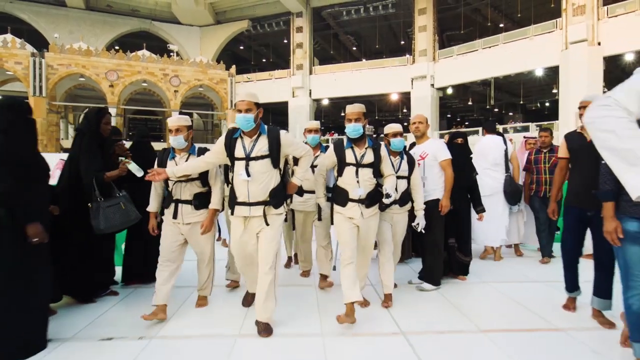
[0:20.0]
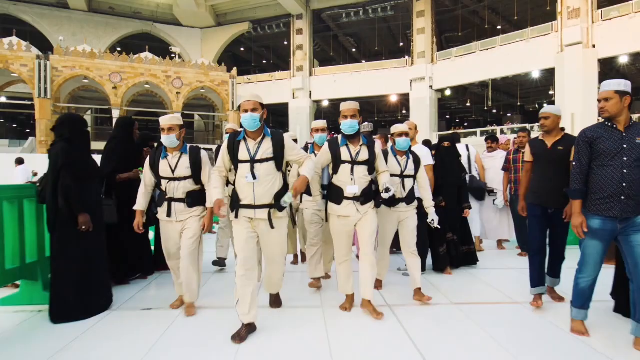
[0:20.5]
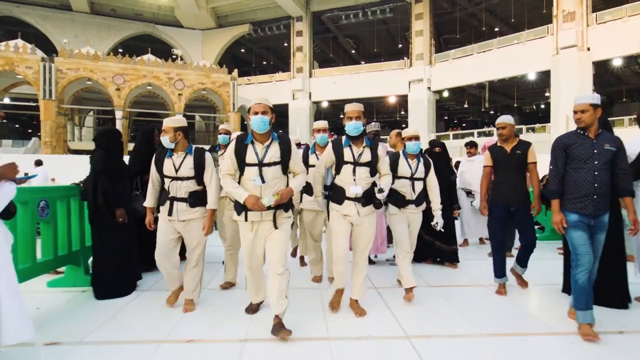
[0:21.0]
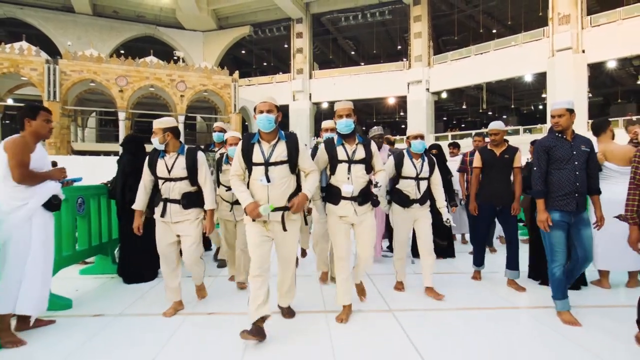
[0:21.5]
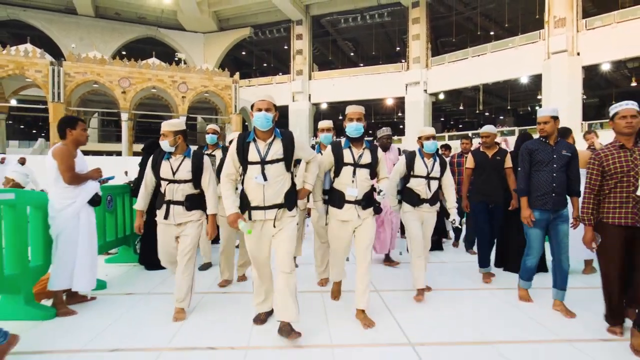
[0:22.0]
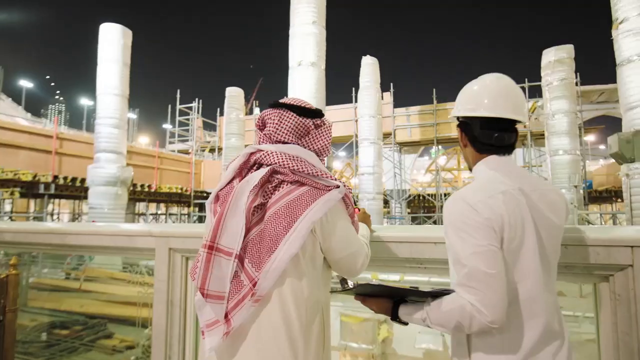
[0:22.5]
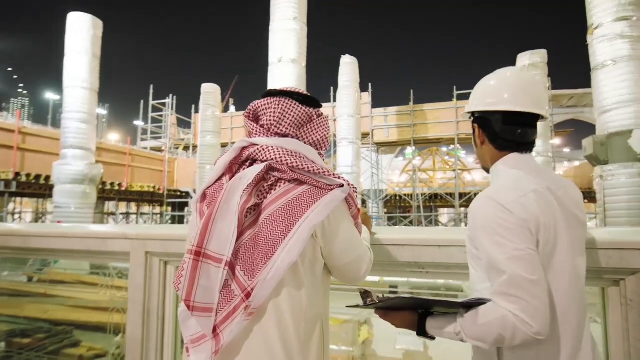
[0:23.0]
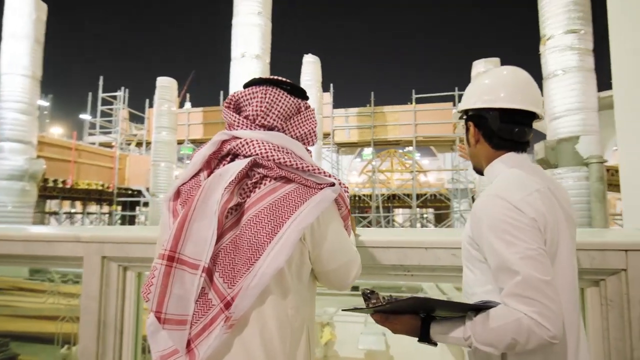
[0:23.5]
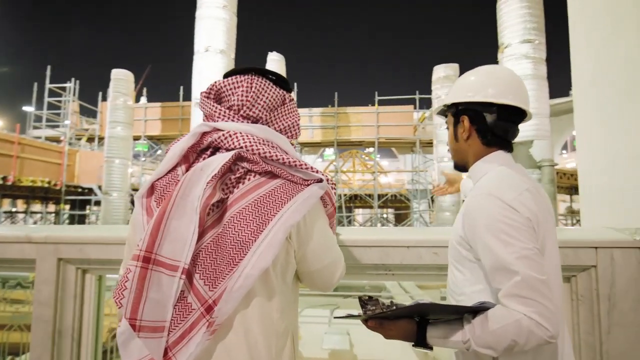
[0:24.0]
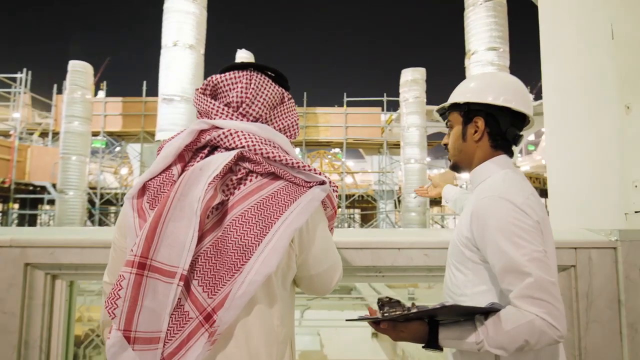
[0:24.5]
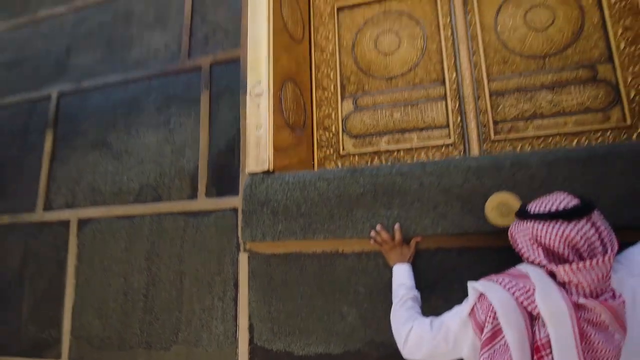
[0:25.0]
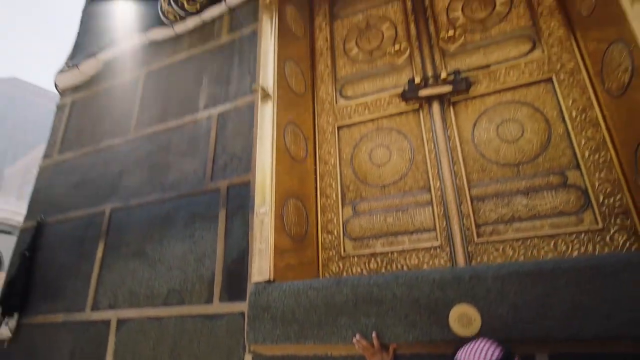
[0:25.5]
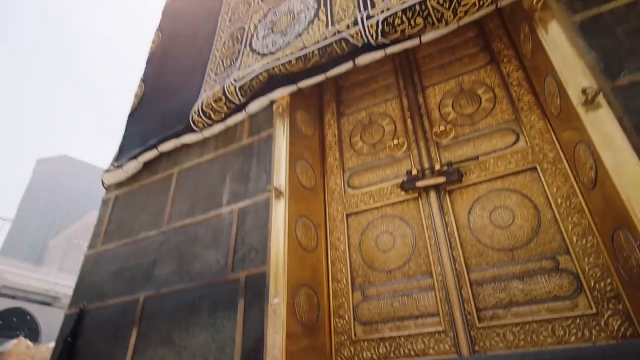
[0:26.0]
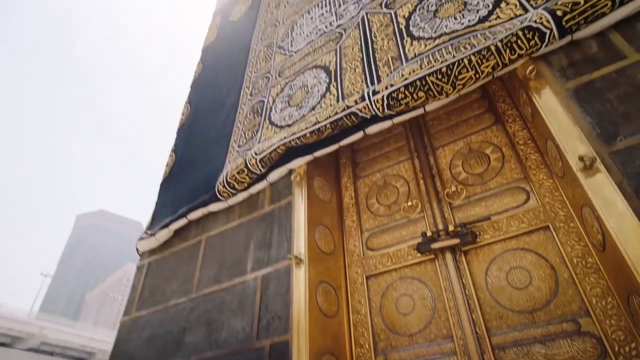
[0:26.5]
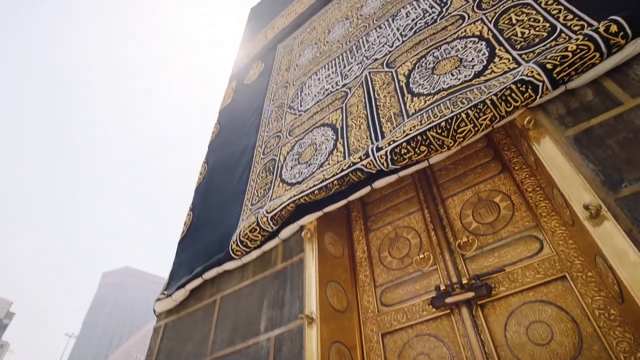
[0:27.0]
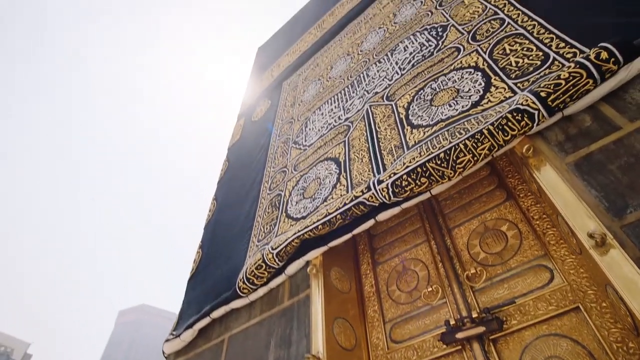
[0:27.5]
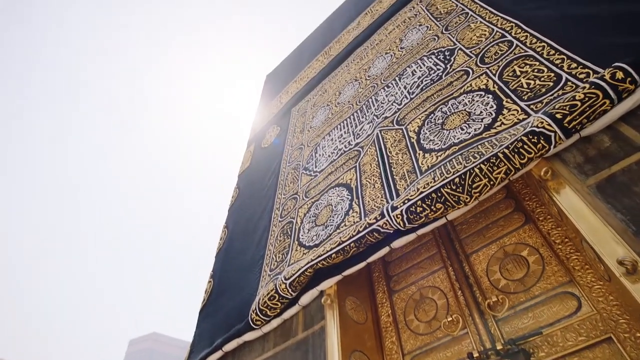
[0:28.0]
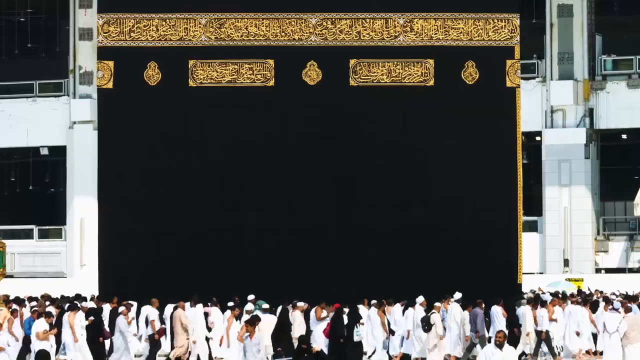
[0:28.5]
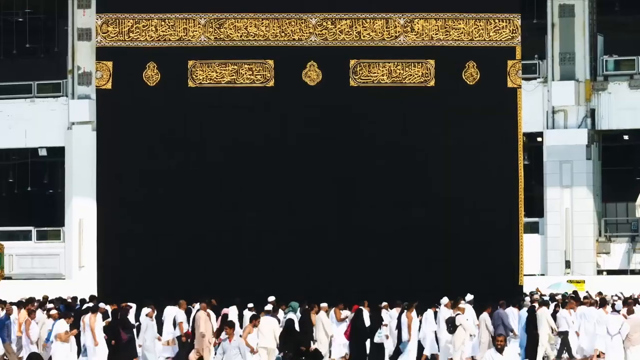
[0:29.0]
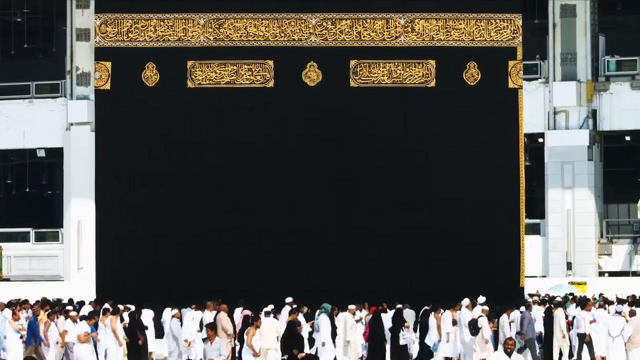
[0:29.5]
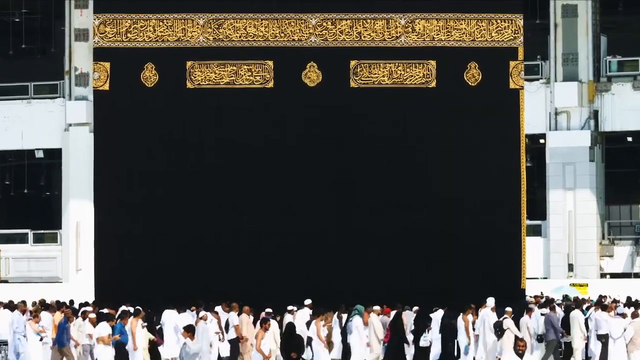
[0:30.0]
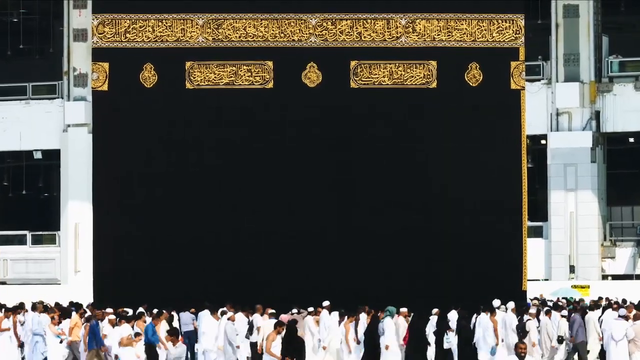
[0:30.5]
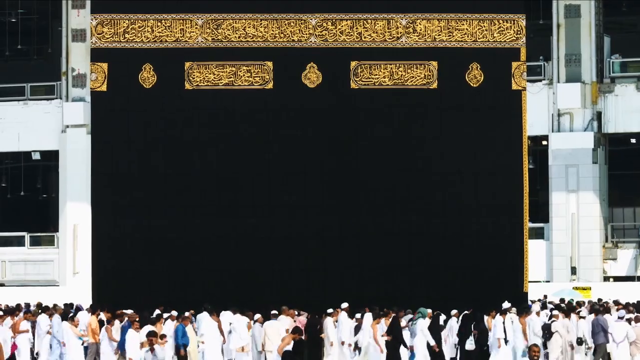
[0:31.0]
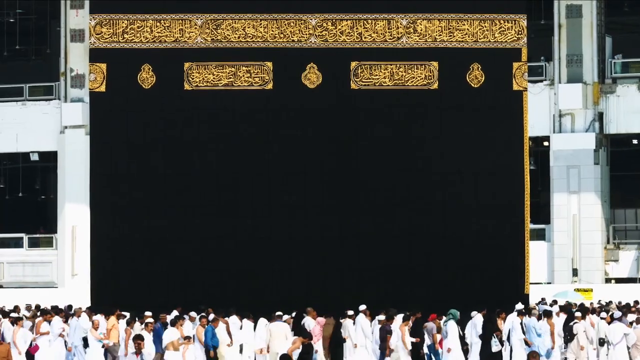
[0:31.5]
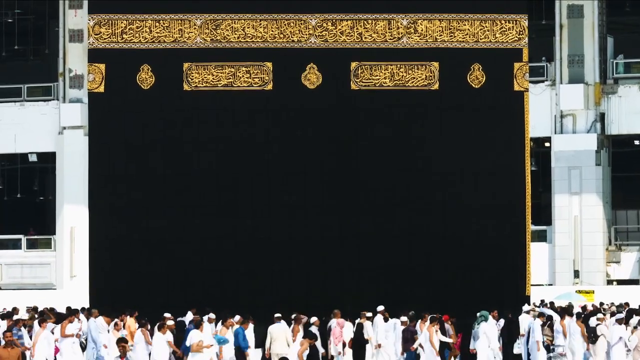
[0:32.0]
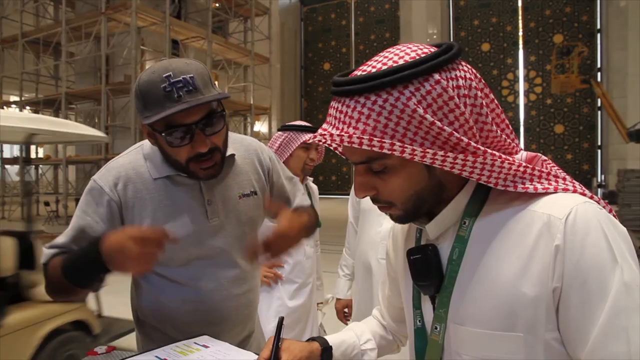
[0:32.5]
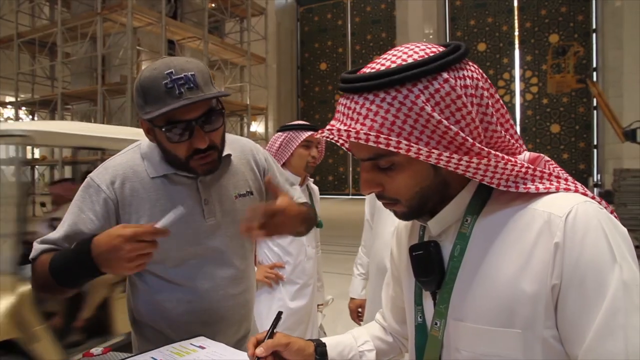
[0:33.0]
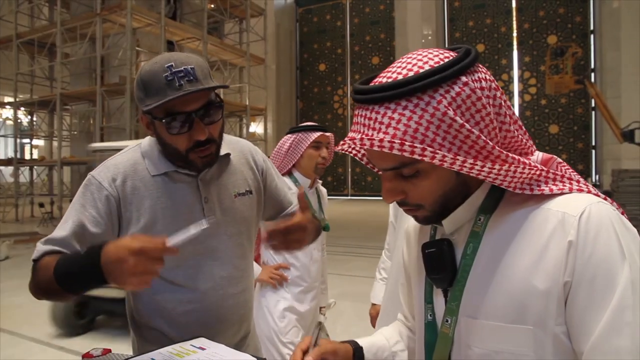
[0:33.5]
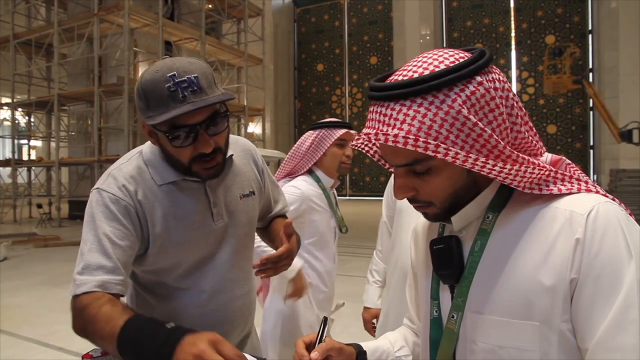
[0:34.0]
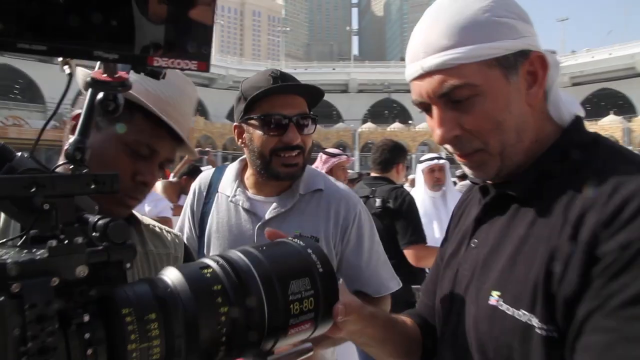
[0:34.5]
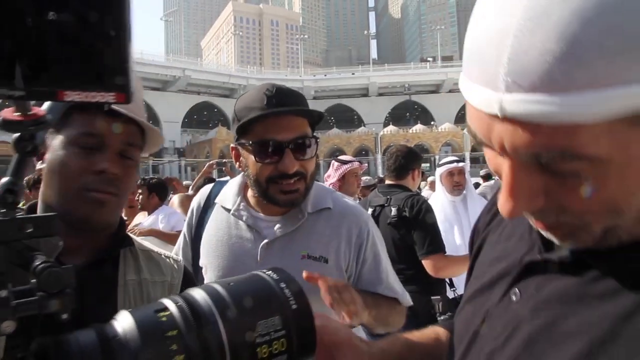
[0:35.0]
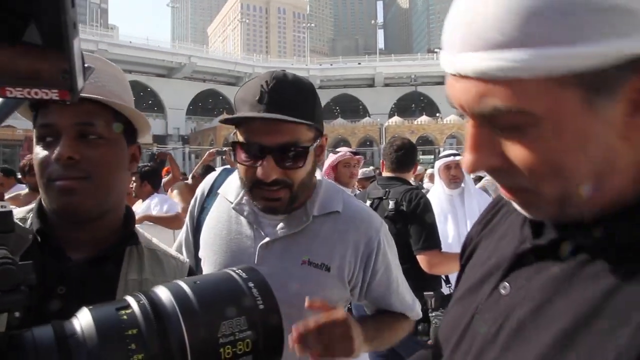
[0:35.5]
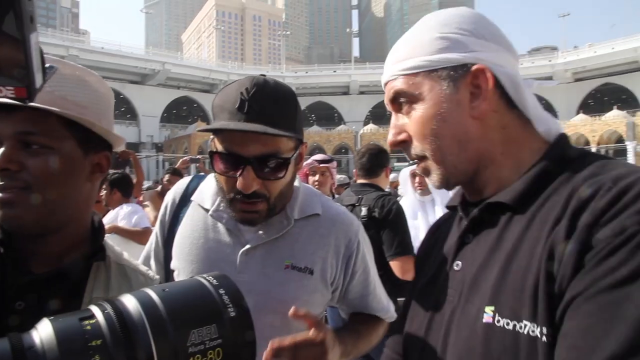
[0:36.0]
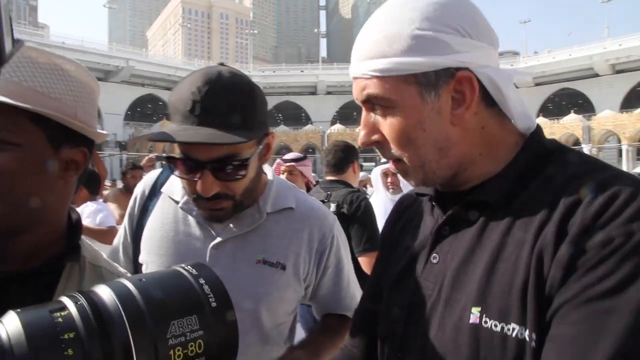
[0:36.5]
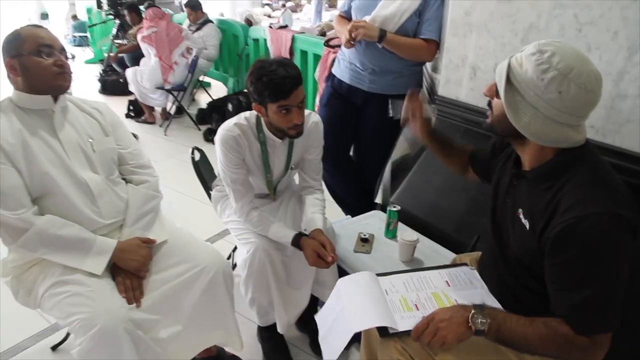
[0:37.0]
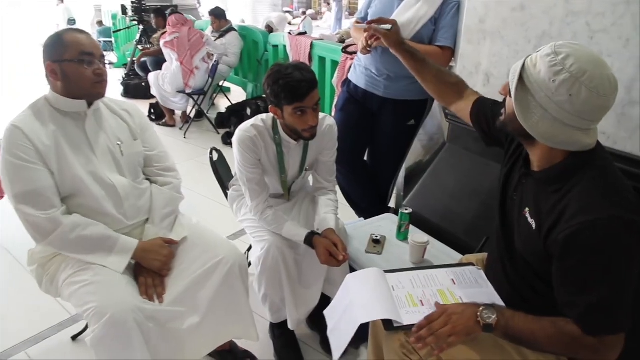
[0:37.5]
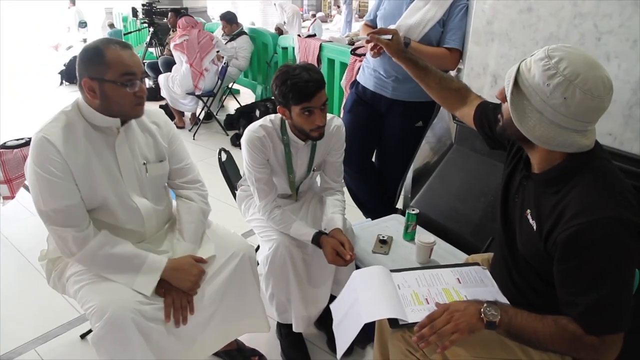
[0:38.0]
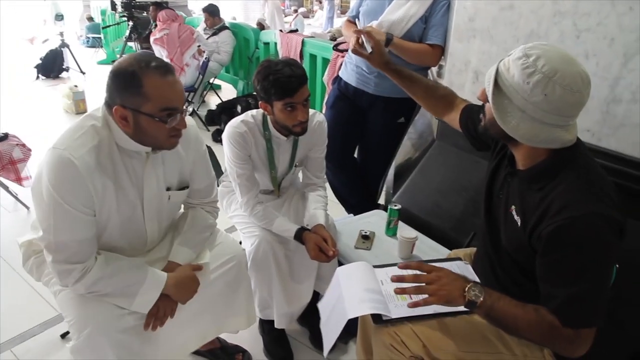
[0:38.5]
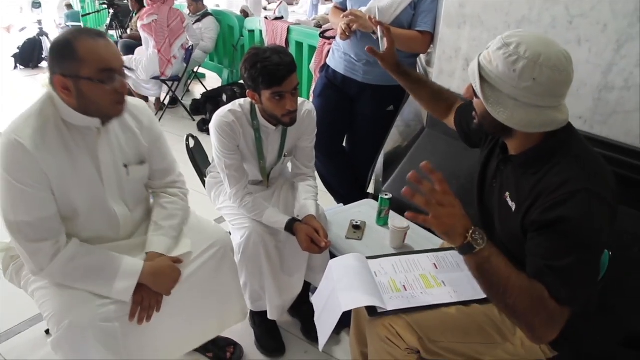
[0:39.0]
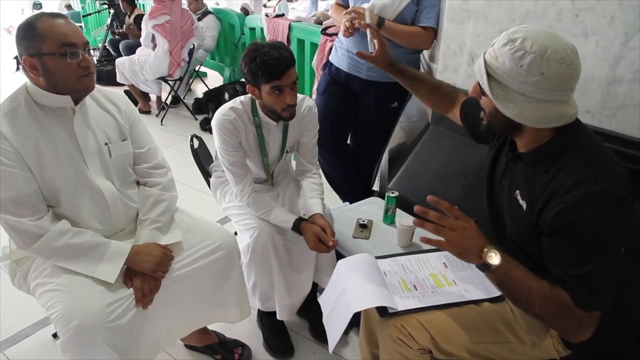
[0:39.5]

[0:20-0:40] Men wearing masks and dressed in cream enter a building. Arabic buildings appear, seemingly prayer areas, with large numbers of Arabs walking around the building. The movie crew tells some of them what to do, instructing them for the shoot while people going around are being filmed, so it is probably a movie shoot. Two men sit down as they are told what to do next in the shoot. Hundreds of people in Arab clothes are included in the filming, and cameras are visible behind them.